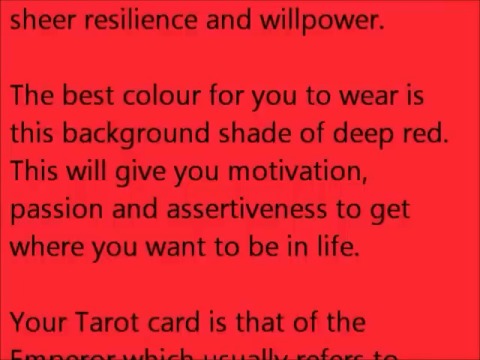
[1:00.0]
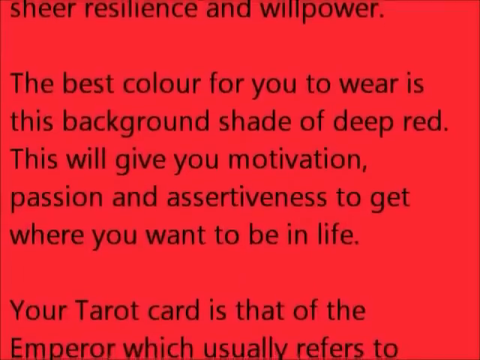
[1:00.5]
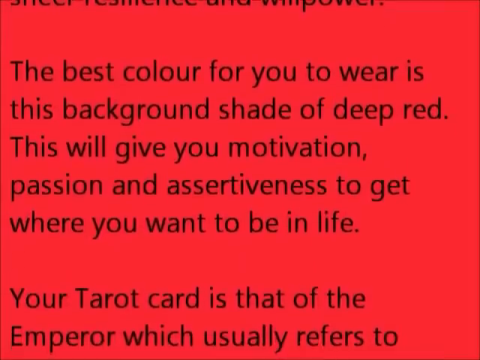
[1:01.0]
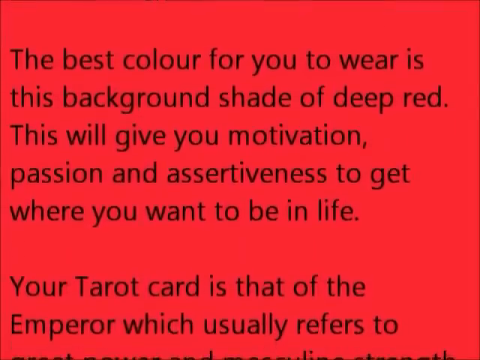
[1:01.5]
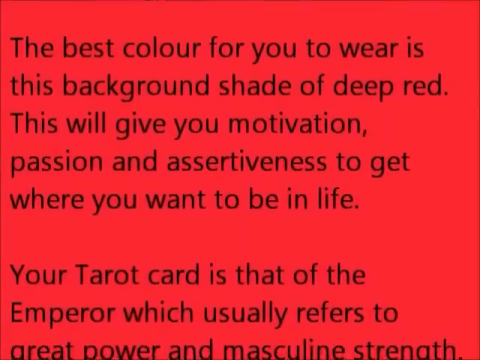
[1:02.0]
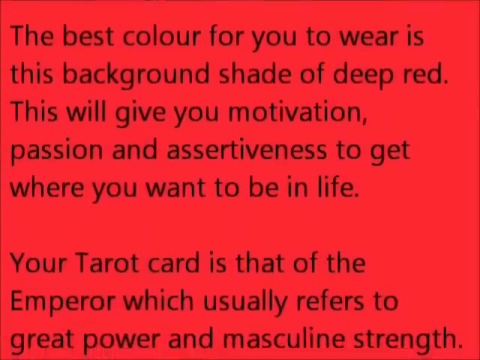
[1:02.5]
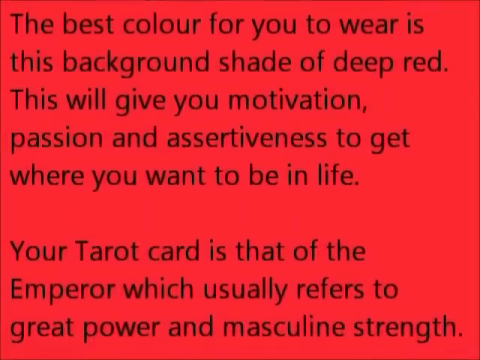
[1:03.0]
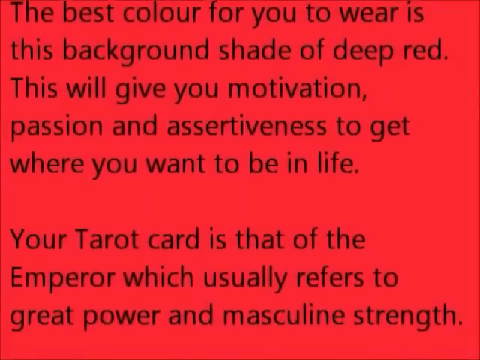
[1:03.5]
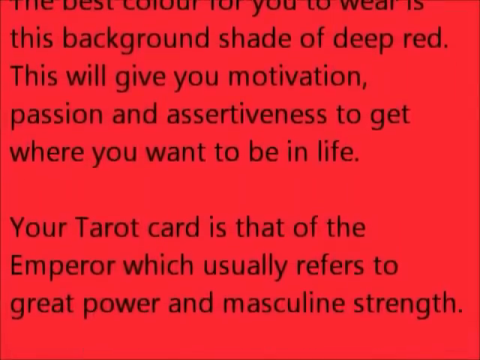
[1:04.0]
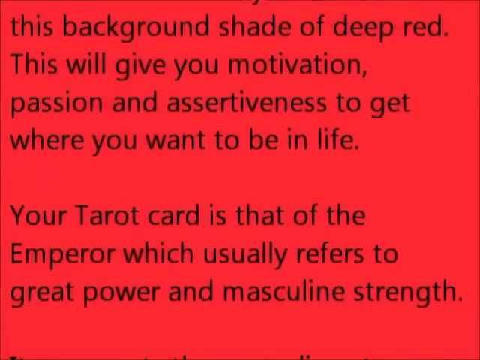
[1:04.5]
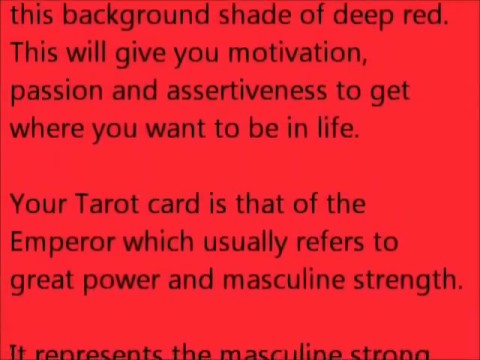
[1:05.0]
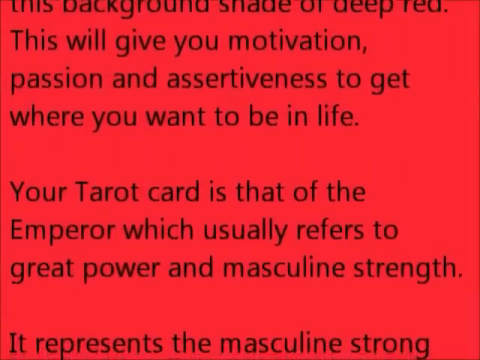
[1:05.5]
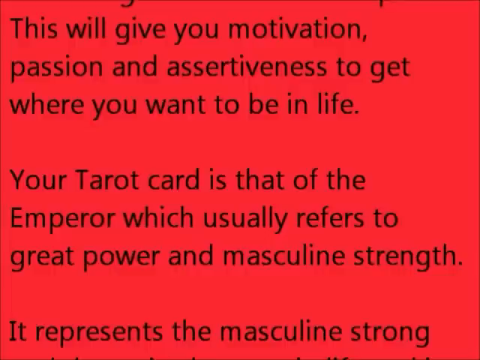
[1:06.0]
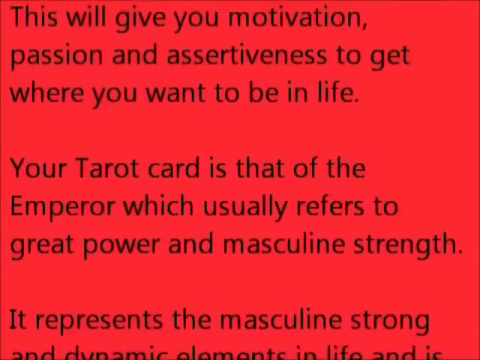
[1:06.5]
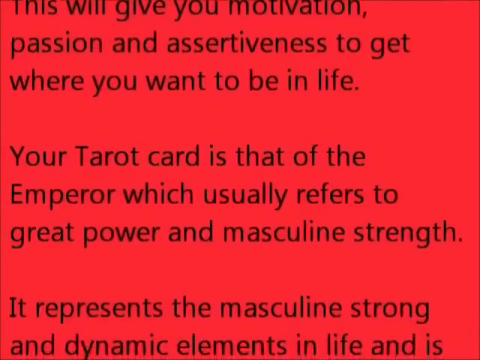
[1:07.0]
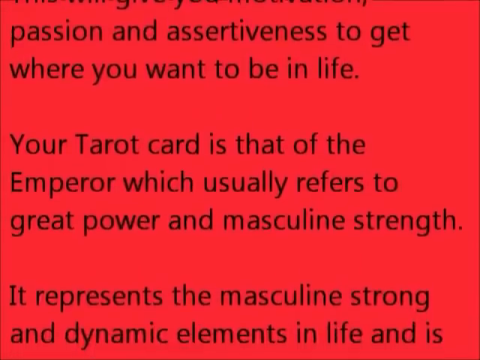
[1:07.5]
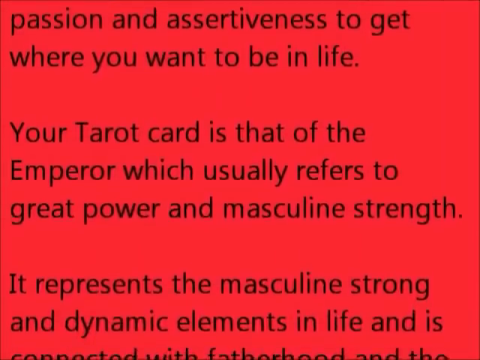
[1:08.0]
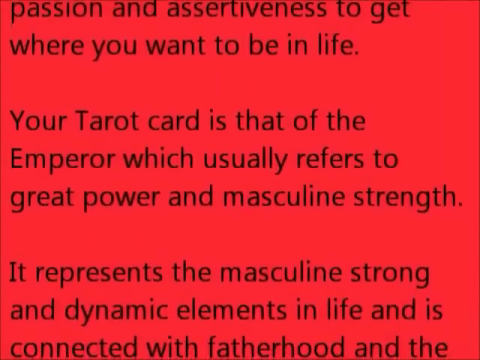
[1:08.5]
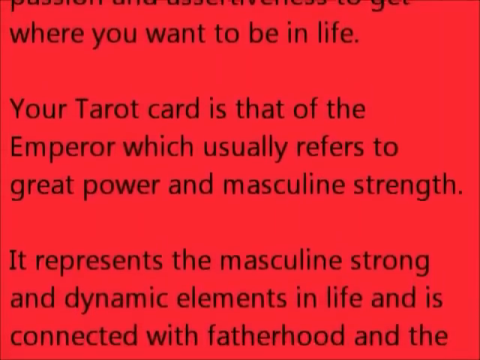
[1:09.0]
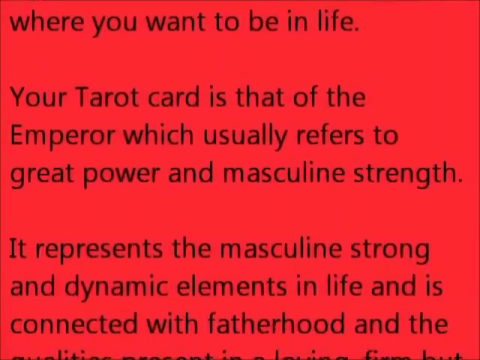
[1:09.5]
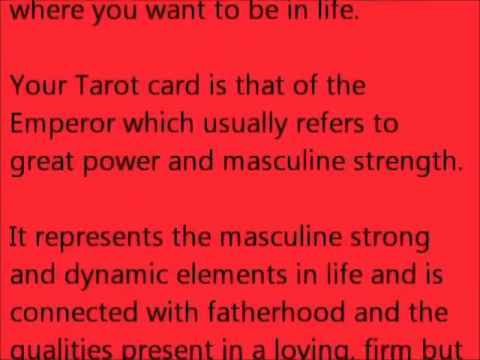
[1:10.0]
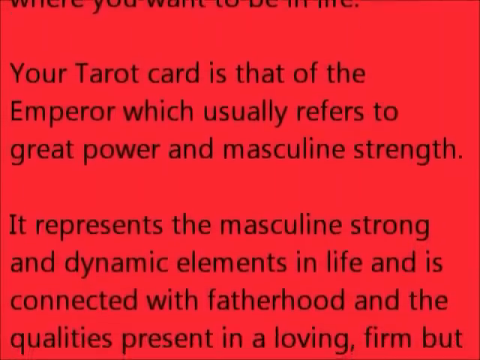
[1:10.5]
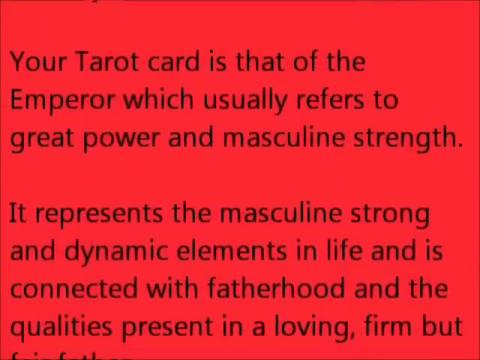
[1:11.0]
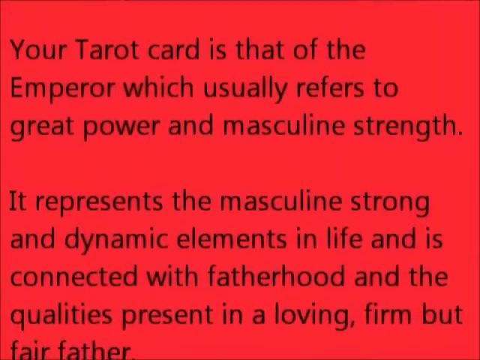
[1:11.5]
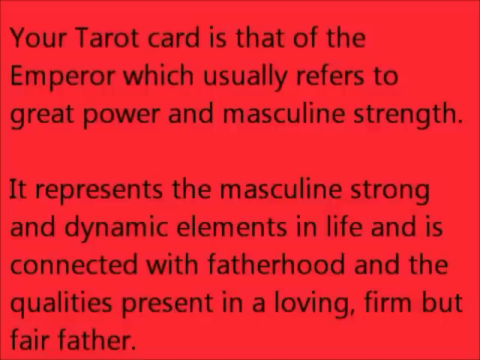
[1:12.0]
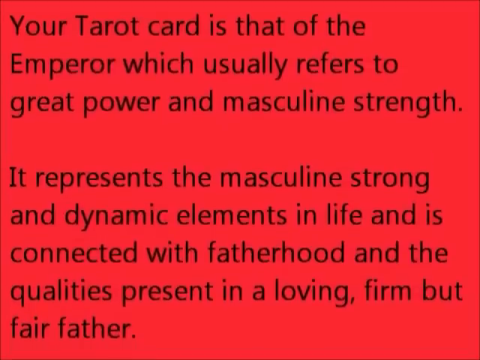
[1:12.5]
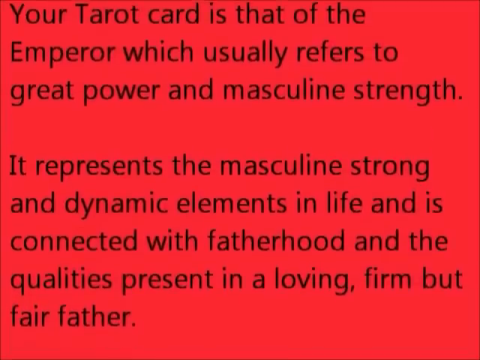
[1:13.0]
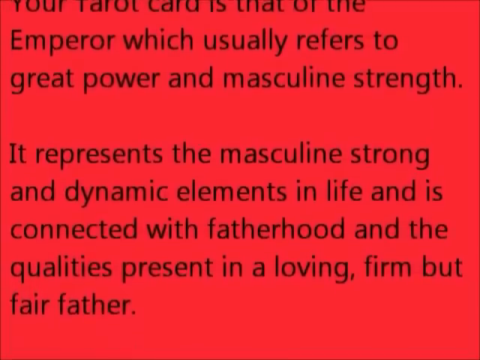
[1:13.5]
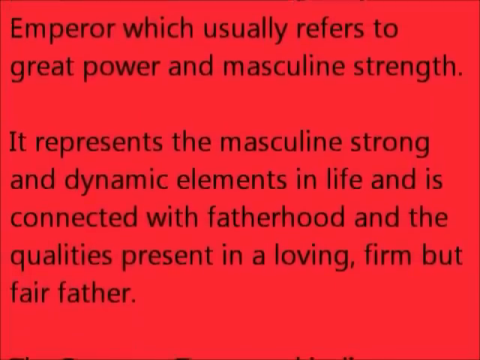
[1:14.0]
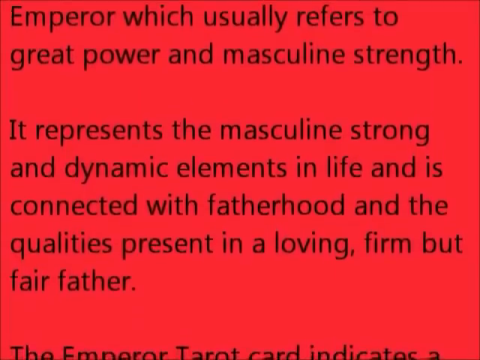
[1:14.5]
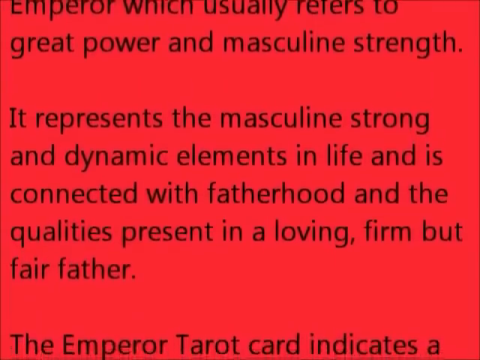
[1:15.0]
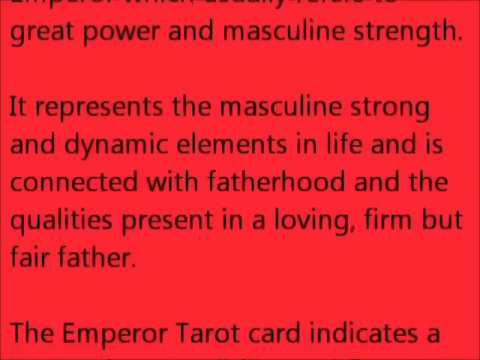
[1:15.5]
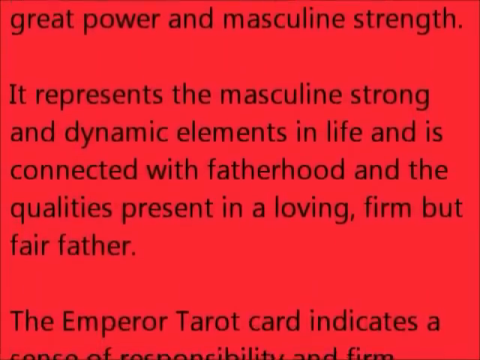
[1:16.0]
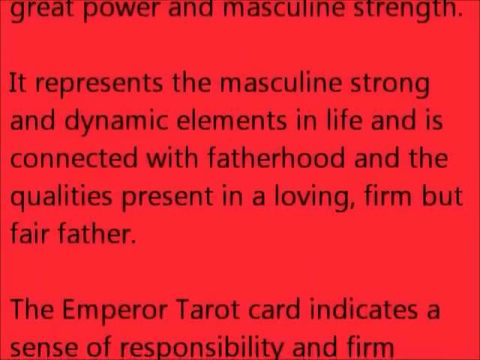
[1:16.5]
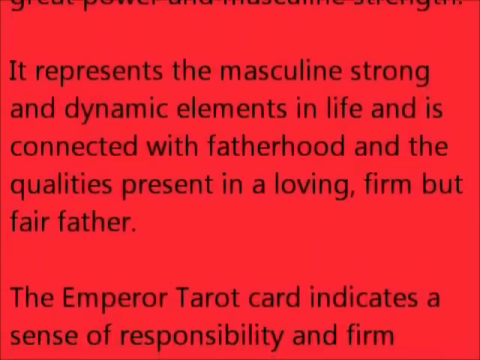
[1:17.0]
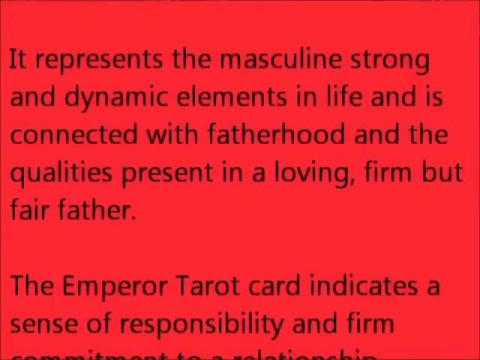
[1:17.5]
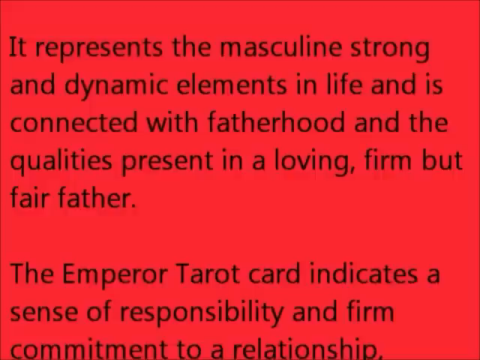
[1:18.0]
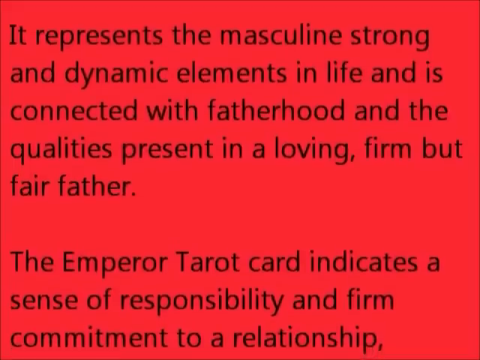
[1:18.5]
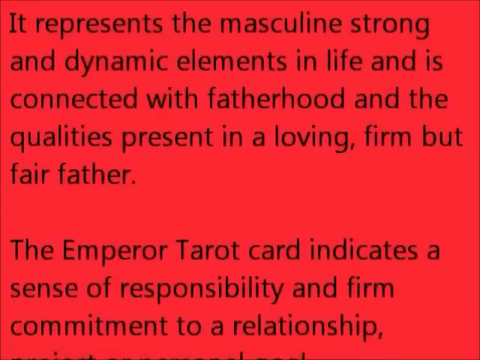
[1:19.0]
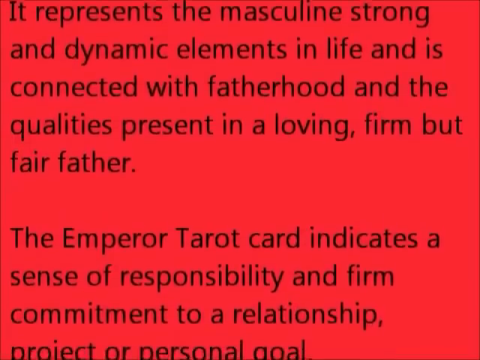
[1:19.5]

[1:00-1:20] The deep red background continues with written words, apparently from the psychic. The text reads "Your tarot card is that of the emperor which usually refers to great power and masculine strength it represents the masculine strong and dynamic elements in life and is connected with fatherhood and the qualities present in a loving" and continues "the emperor tarot card indicates a sense of responsibility and firm commitment to a relationship project or personal goal." The message is written in black, and on very close look the letters of the message are blurred.